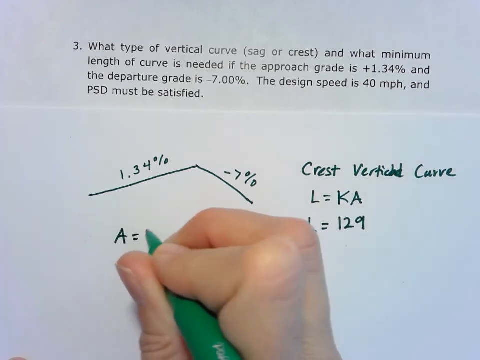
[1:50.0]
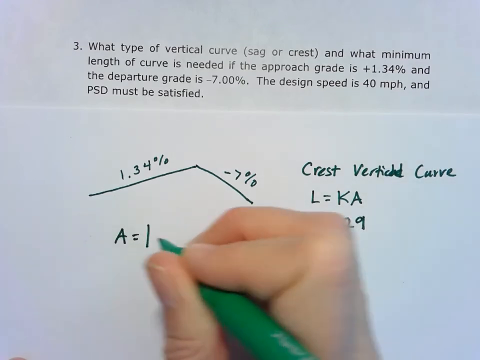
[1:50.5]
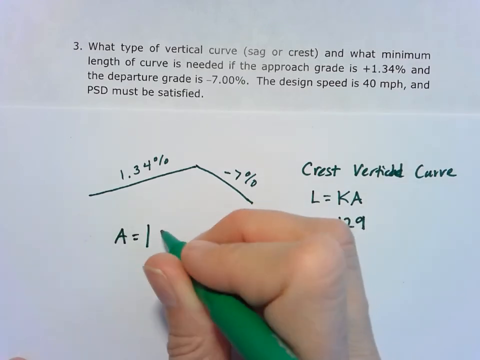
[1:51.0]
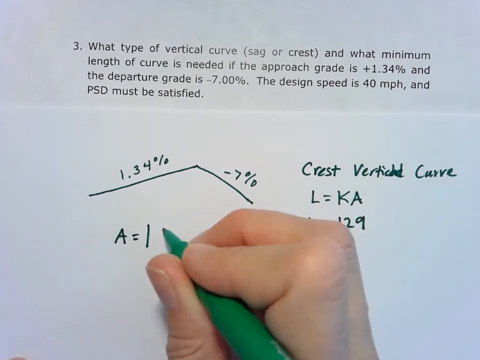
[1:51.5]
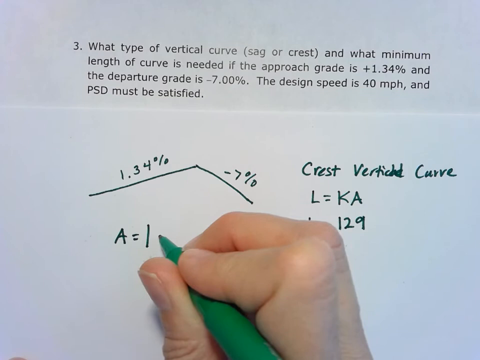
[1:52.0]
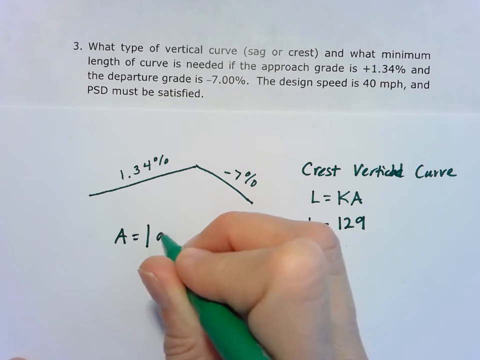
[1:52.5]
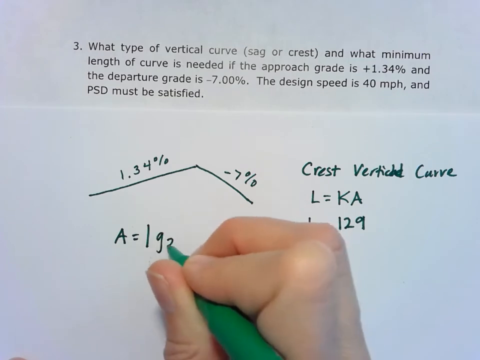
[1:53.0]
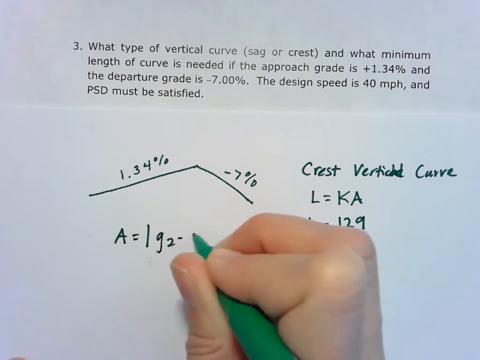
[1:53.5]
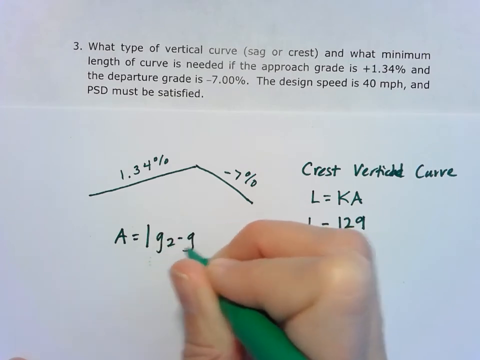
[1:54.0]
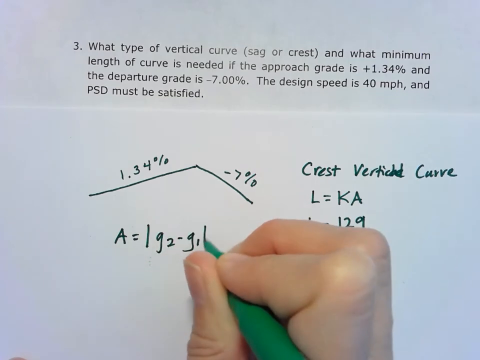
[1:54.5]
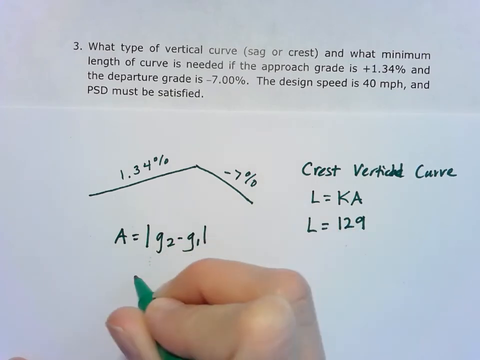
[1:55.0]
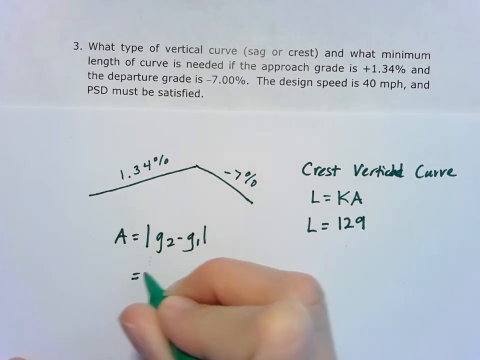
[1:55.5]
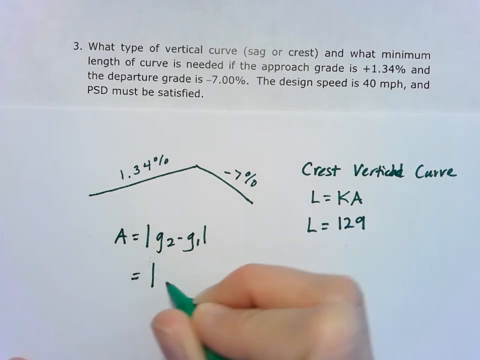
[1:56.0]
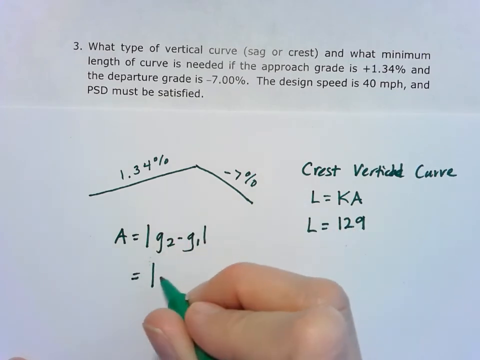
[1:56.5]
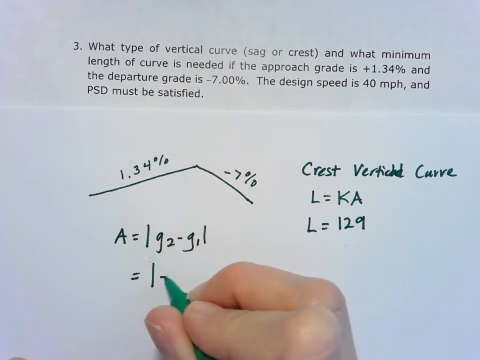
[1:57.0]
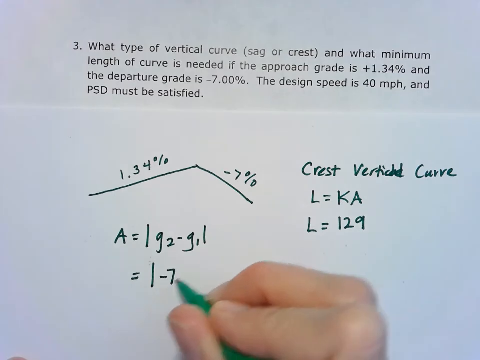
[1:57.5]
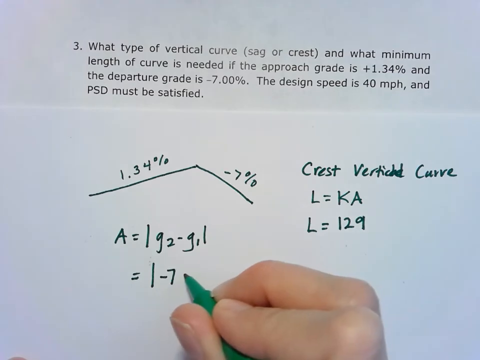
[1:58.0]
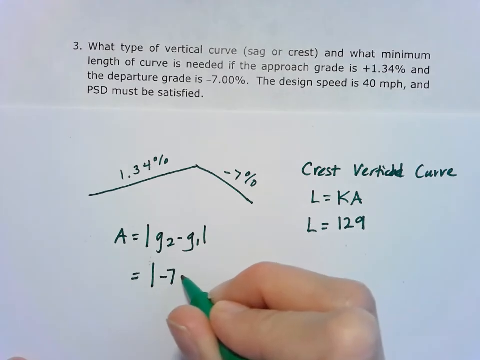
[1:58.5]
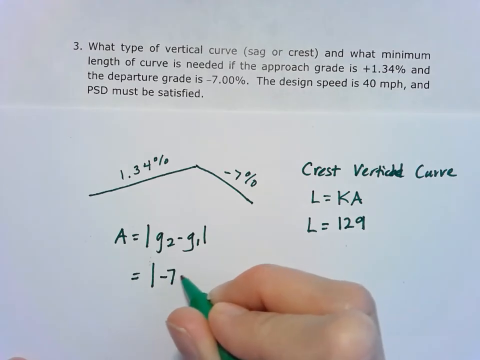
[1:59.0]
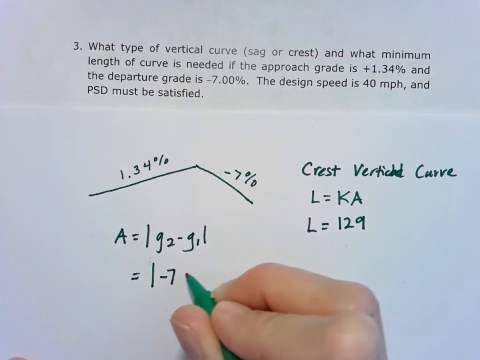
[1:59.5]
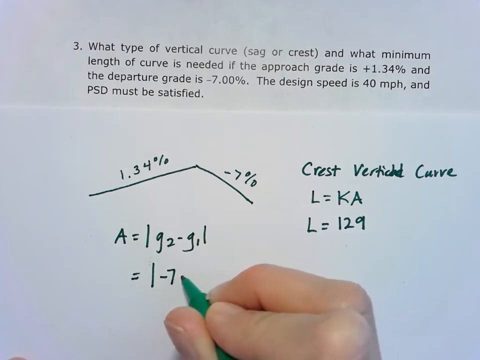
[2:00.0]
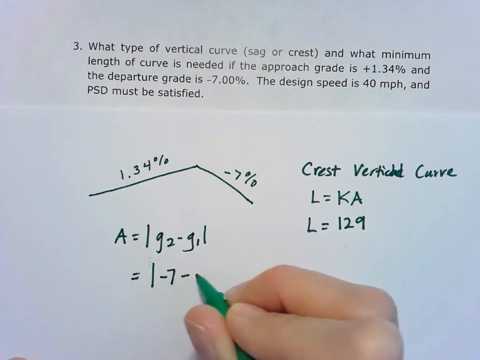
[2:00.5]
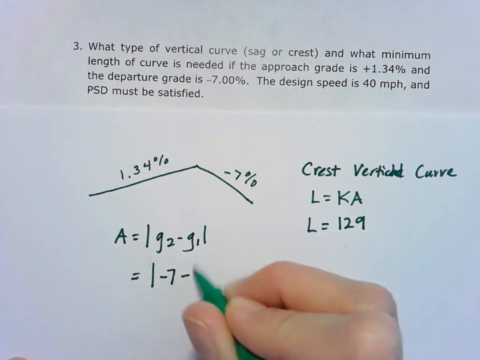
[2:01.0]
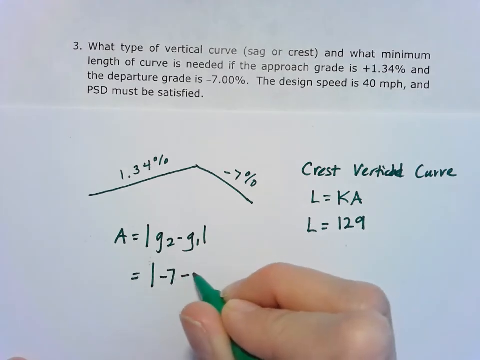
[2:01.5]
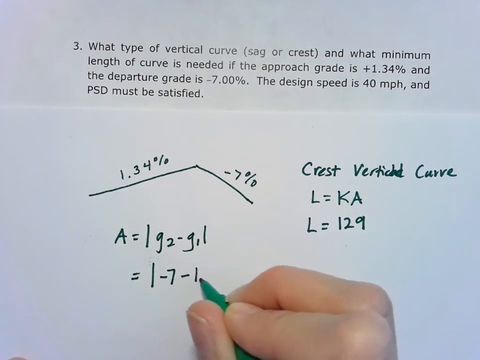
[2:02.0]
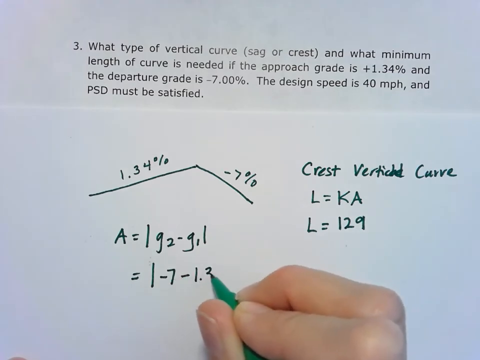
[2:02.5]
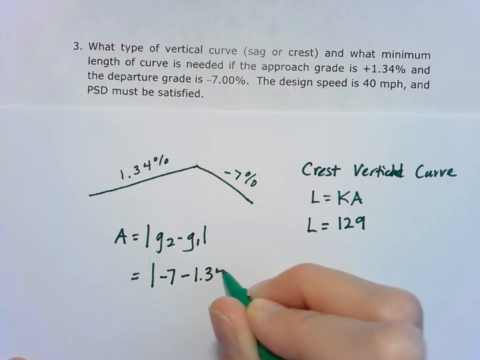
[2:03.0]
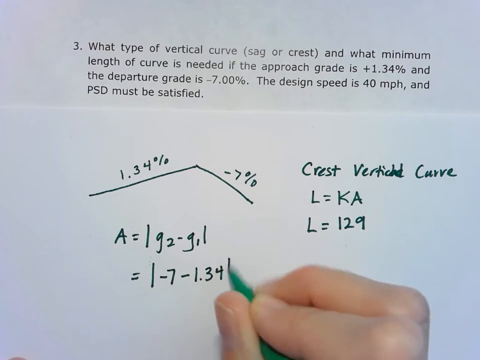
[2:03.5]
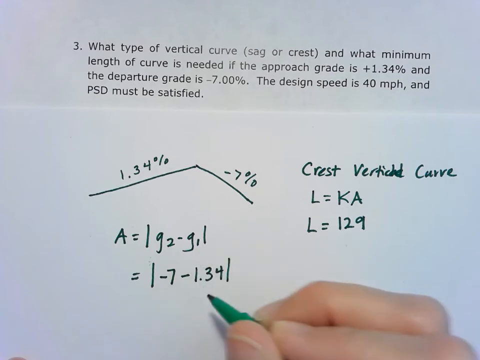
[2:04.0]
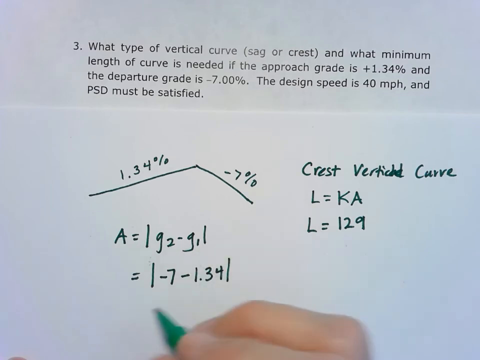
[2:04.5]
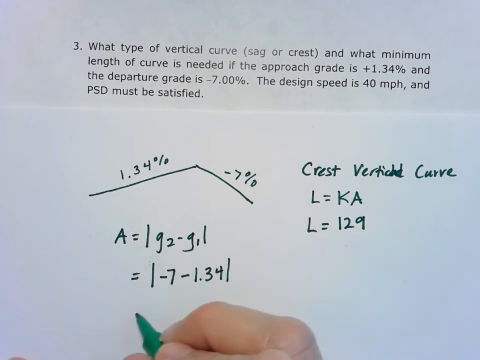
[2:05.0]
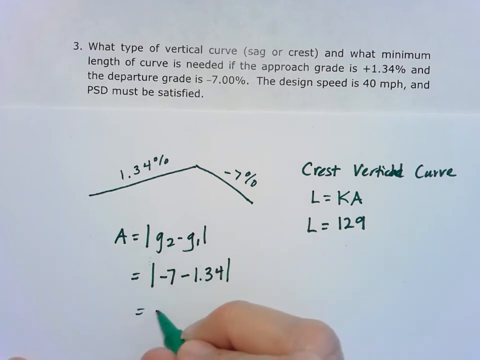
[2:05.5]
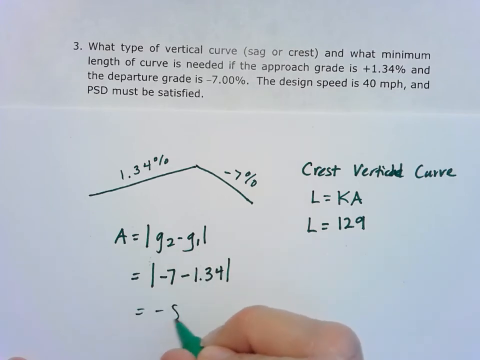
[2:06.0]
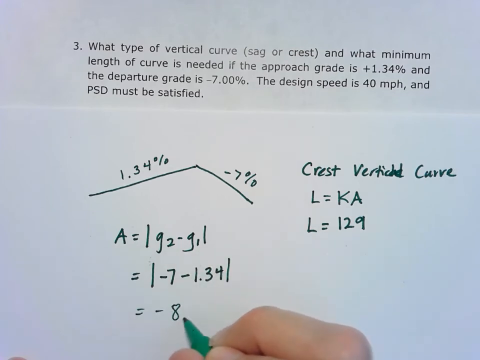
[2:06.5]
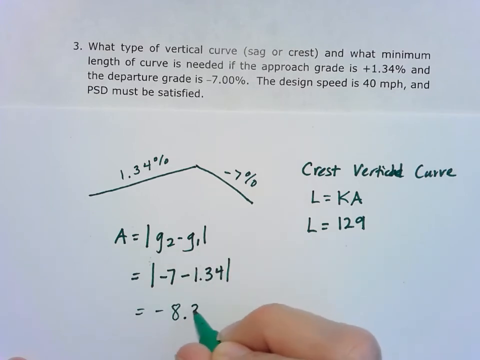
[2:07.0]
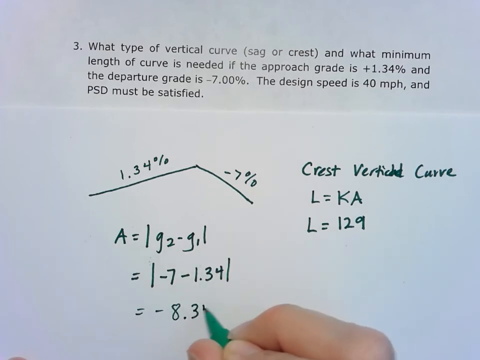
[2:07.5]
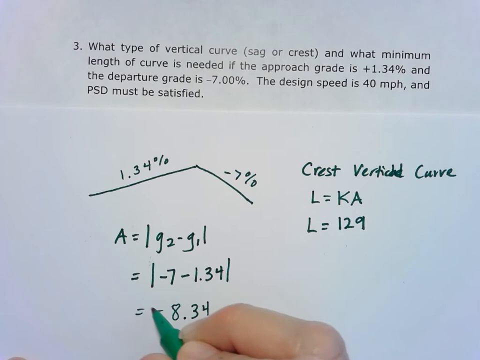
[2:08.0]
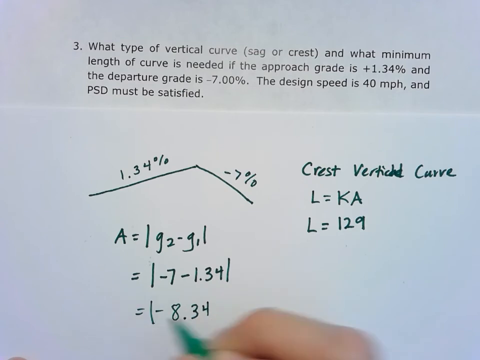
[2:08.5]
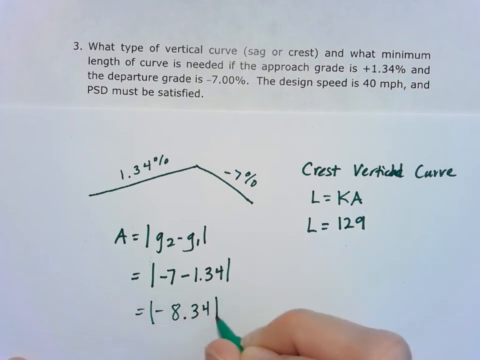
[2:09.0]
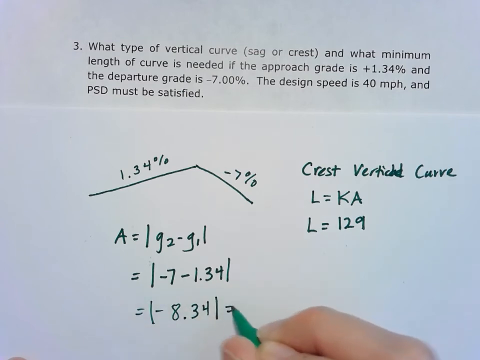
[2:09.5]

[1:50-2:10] Only a person's right hand is seen, holding a green felt-tip pen and writing the workings for the answer to the question at the top of the page. It writes underneath a two-line diagram that has 1.34% on the left side and -7% on the right side, next to "Crest Vertical Curve" and "L = 129". It works on a different part of the answer: "A = g2 - g1 = -7 - 1.34 = -8.34". All the values are placed inside vertical lines, indicating that they are absolute values.